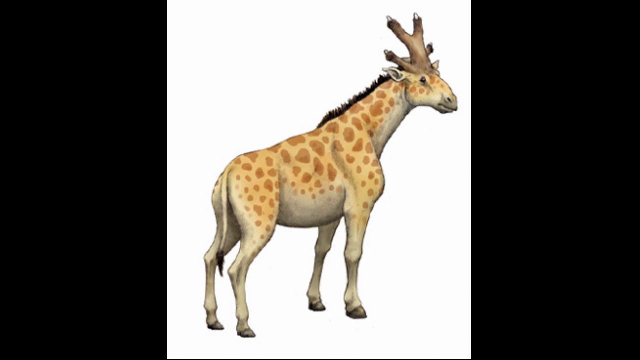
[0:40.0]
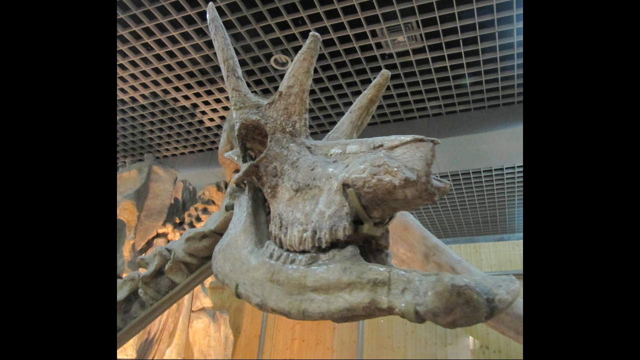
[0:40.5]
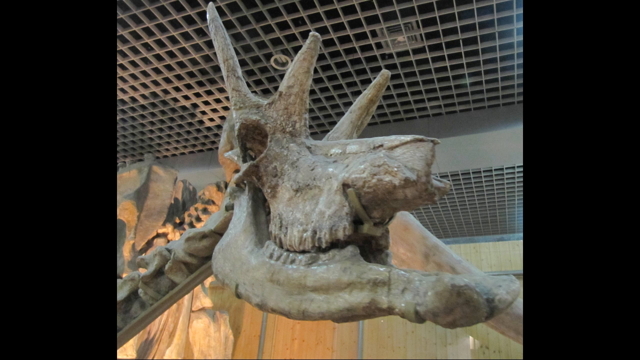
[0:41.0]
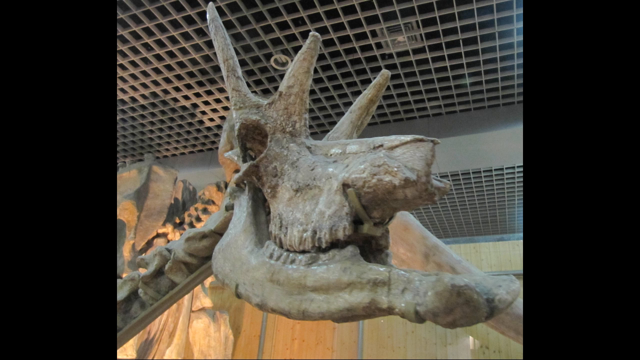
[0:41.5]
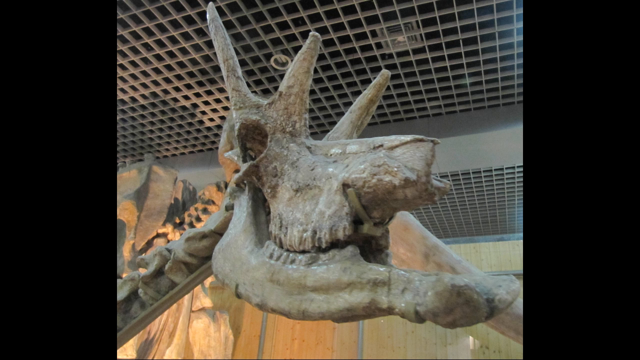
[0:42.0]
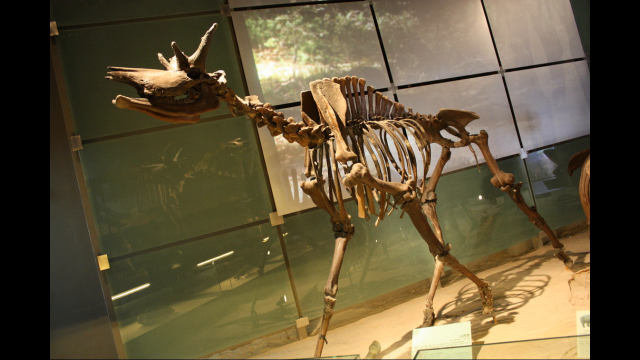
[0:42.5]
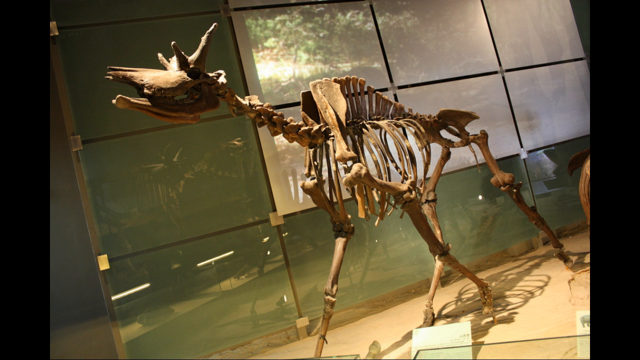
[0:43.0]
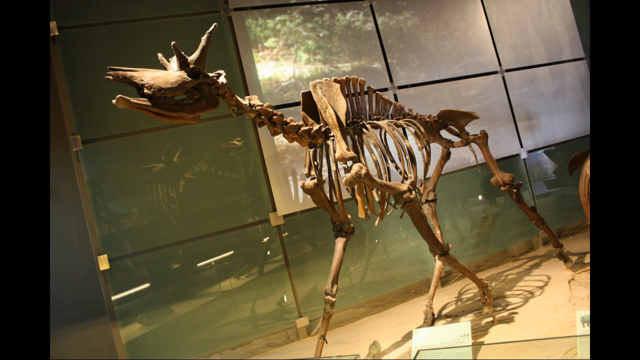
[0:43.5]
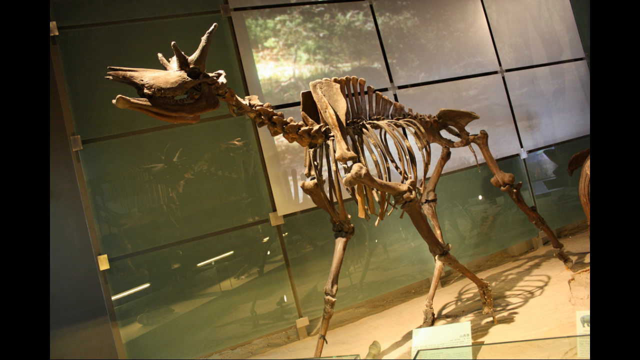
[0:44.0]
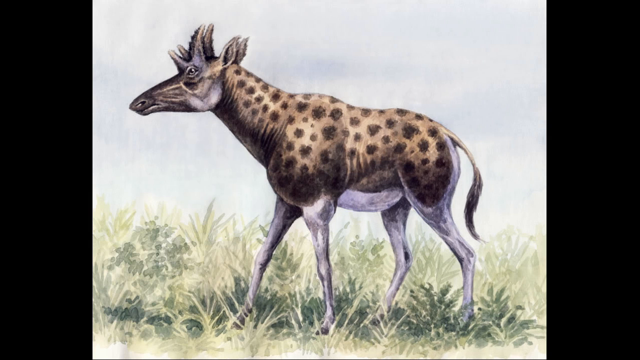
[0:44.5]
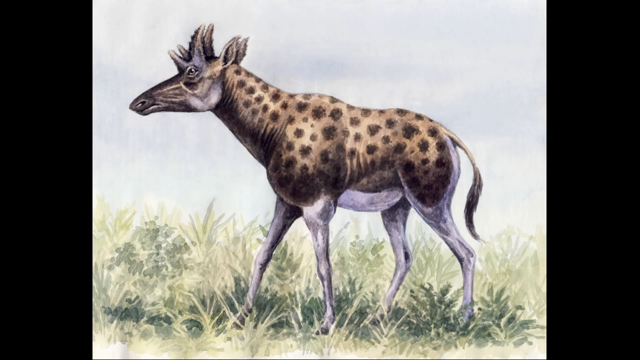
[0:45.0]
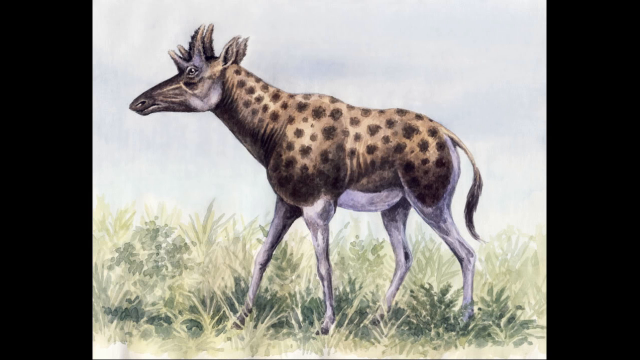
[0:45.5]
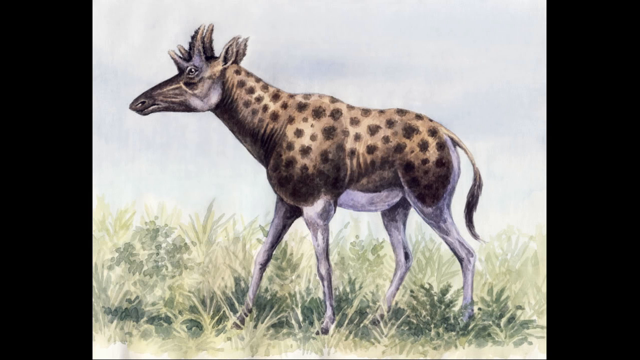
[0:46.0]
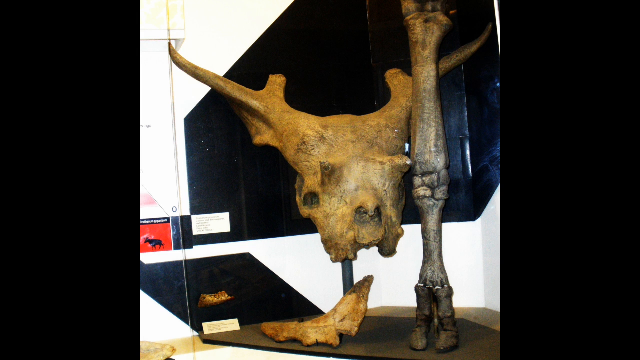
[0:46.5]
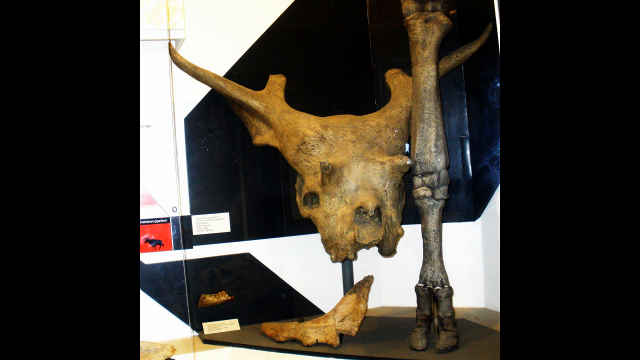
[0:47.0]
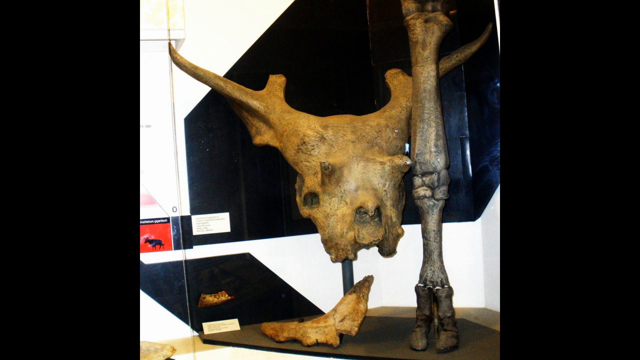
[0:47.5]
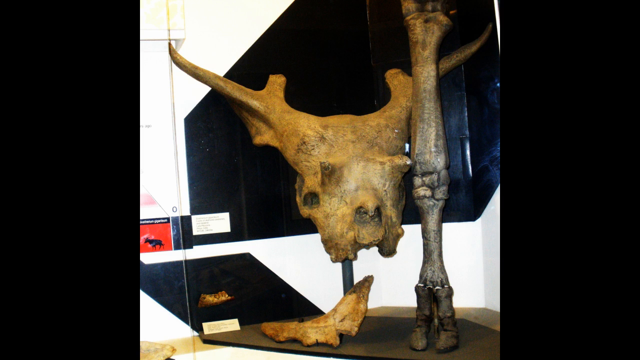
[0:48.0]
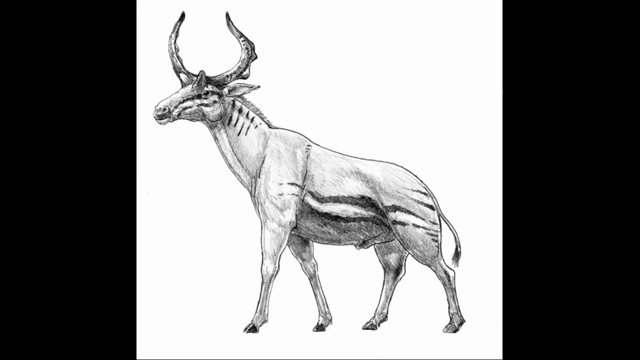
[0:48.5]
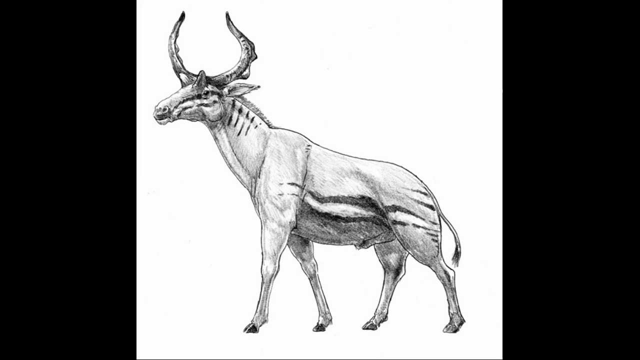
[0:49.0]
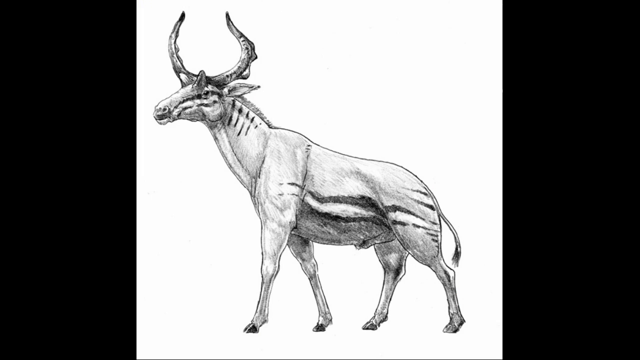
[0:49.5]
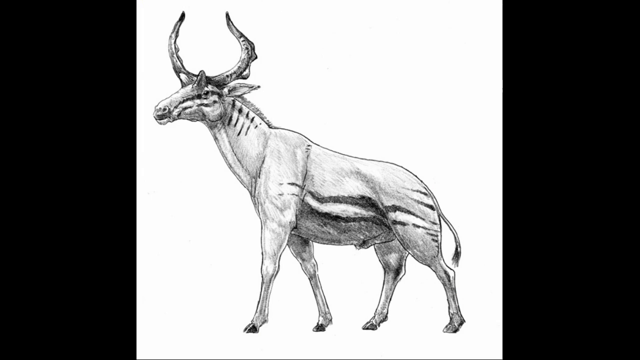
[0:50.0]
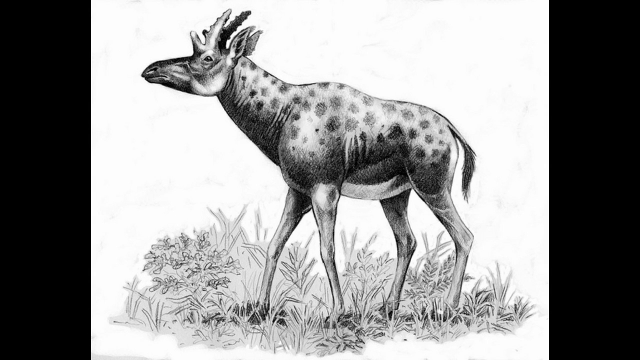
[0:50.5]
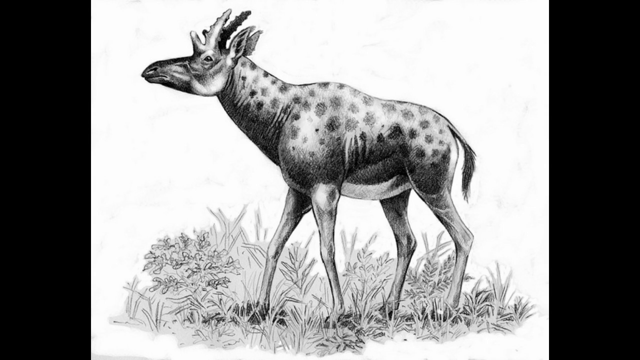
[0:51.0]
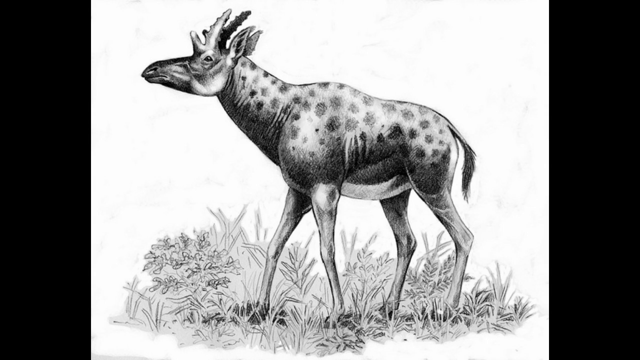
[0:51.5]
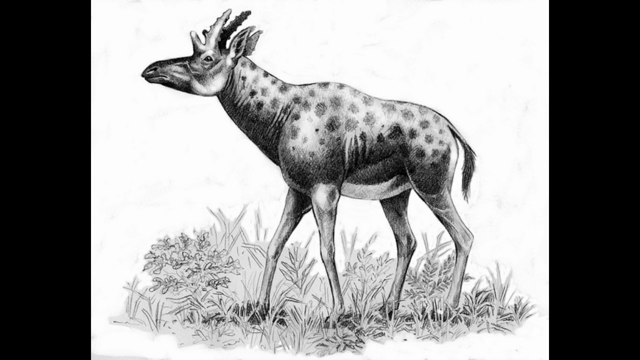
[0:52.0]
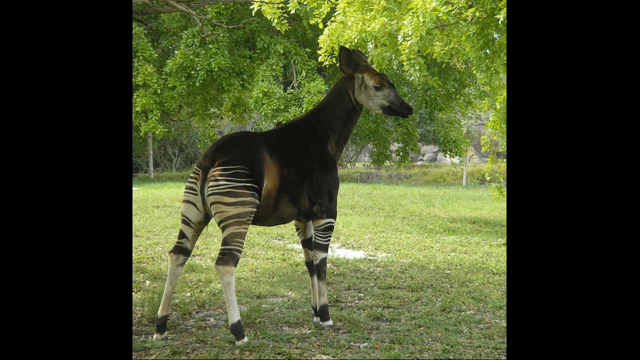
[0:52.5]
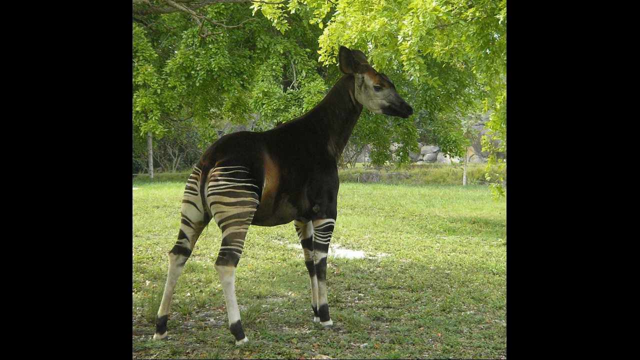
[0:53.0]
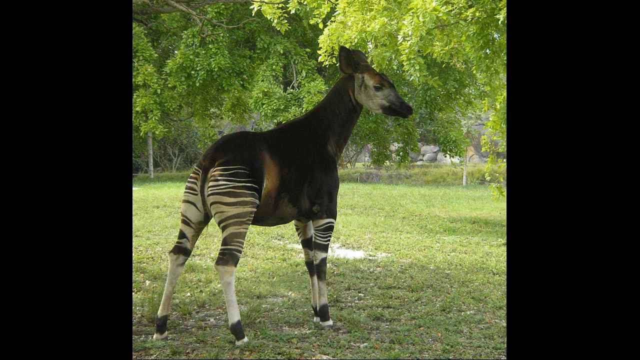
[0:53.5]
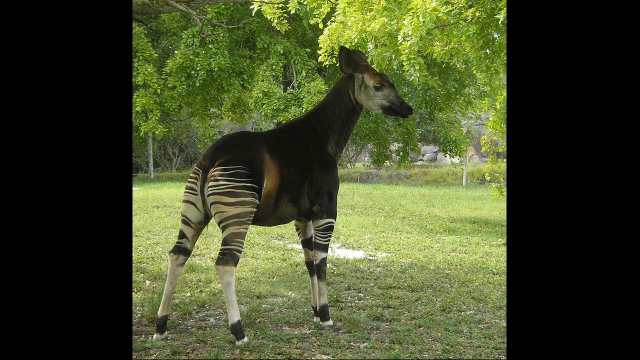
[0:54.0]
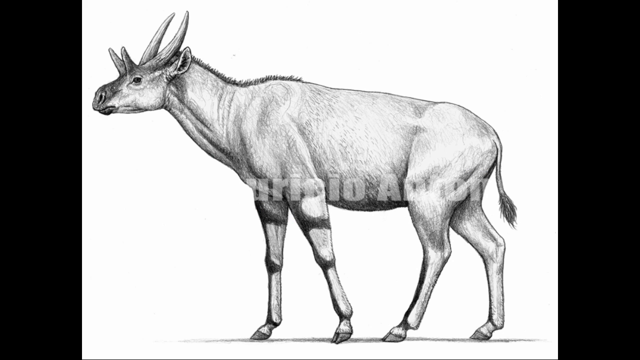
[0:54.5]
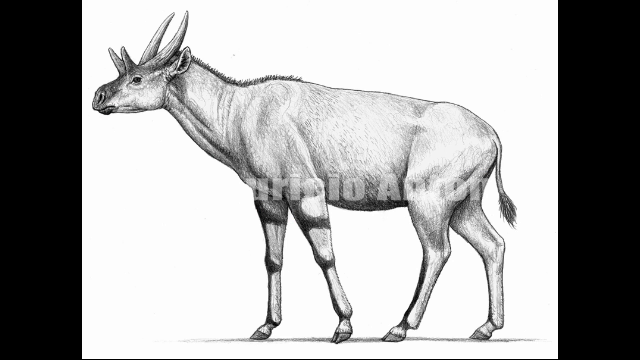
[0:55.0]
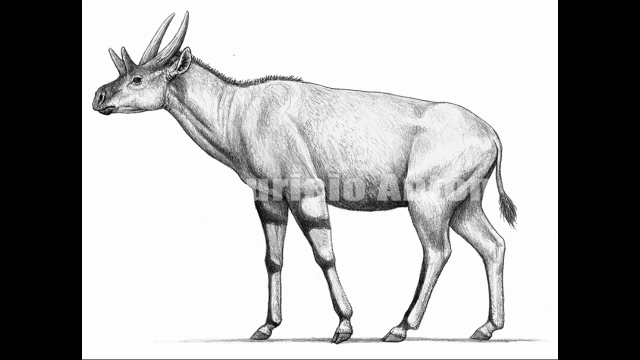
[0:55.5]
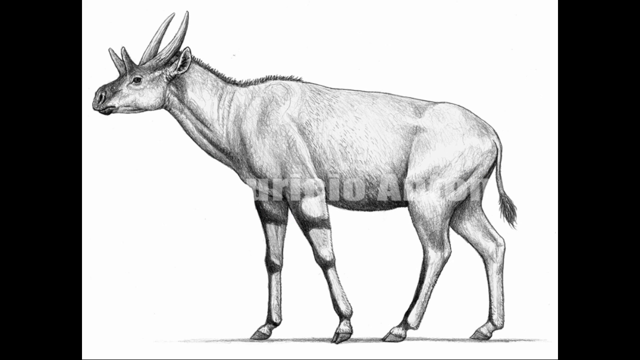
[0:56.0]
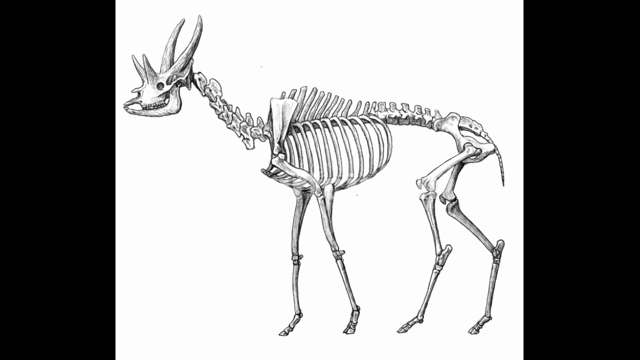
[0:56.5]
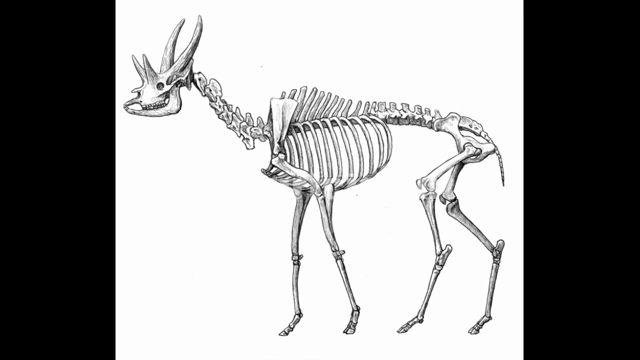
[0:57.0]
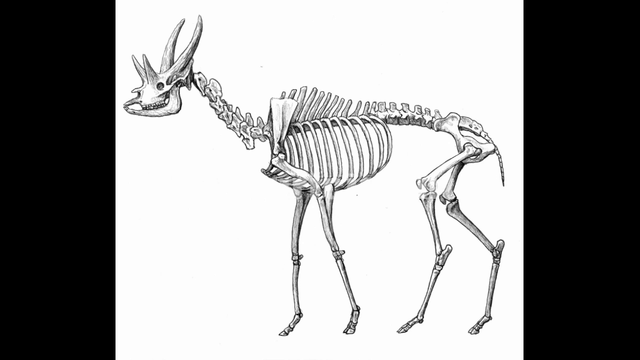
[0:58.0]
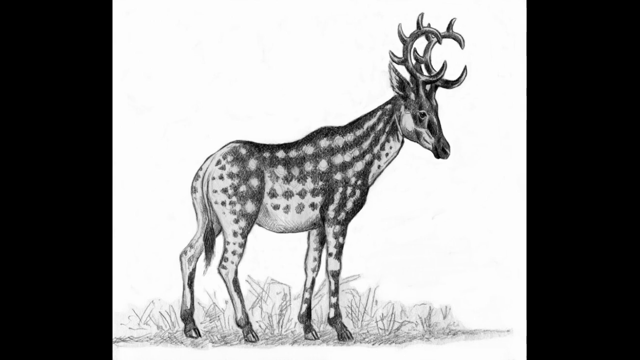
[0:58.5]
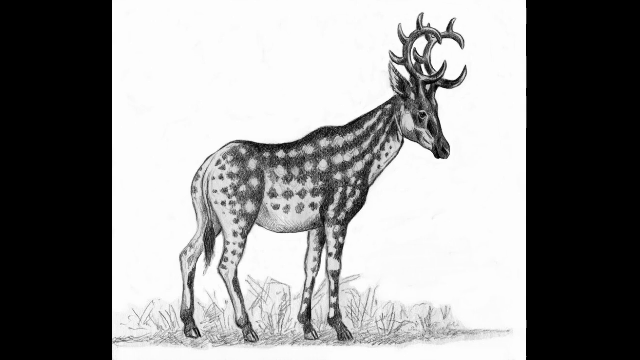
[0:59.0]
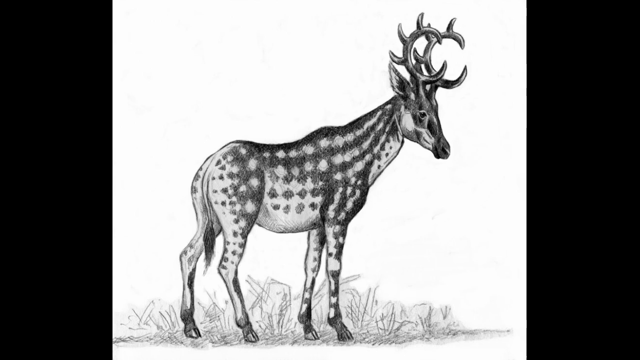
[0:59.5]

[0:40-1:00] A close-up shows the ancient giraffe-like creature, with the horns on its head visible, followed by a full view of the same creature's bones in the museum. Another artist's rendition shows a spotted creature that looks somewhat like a giraffe and wildebeest hybrid. More bones appear, then a black-and-white artist's rendition of an animal that is not the same one but could be in the same family. The spotted, zebra-wildebeest-like creature is shown again. Then comes what looks like a real-life animal, possibly a descendant of these ancient creatures, standing on a grass field; its limbs appear to have zebra stripes and the rest of it is black. More artist's renditions follow: a full-size black-and-white sketch and a sketch of the bones. Finally there is what looks like a deer with spots, with antlers that appear C-shaped.